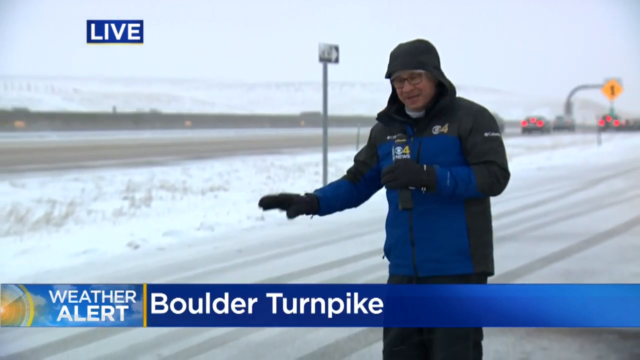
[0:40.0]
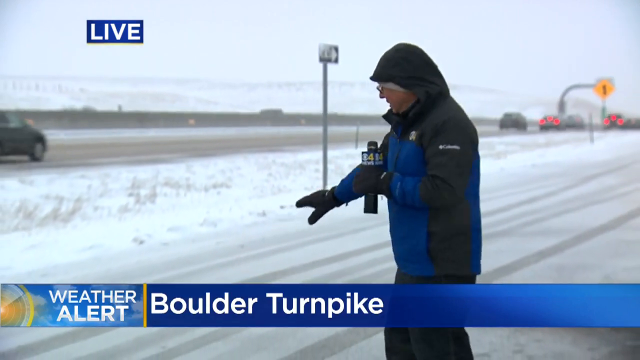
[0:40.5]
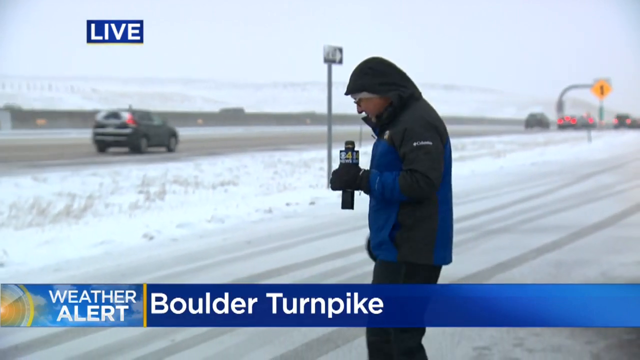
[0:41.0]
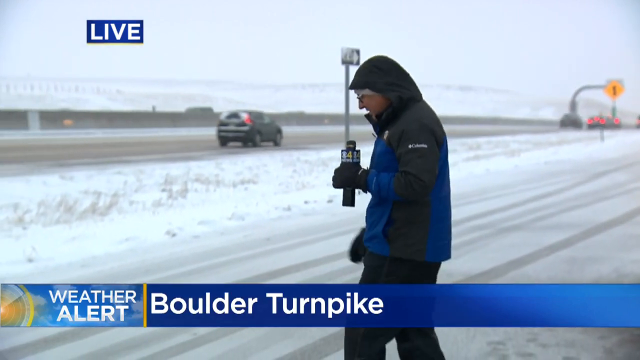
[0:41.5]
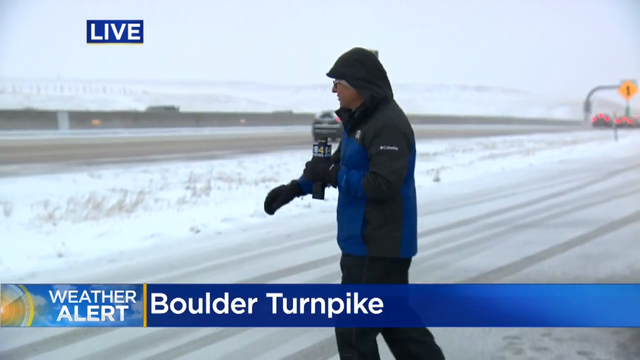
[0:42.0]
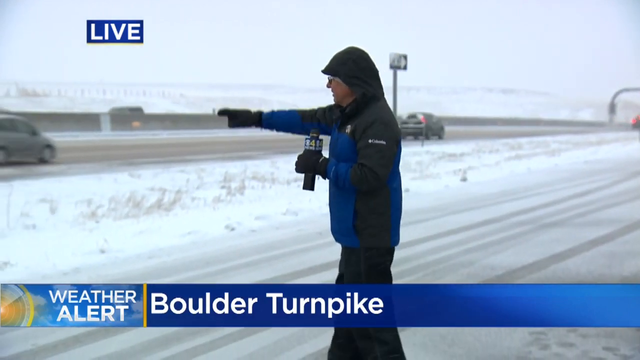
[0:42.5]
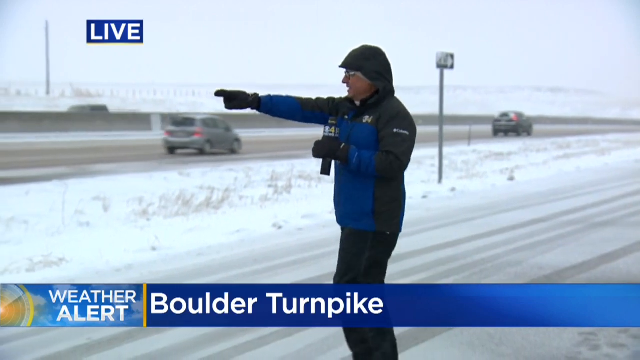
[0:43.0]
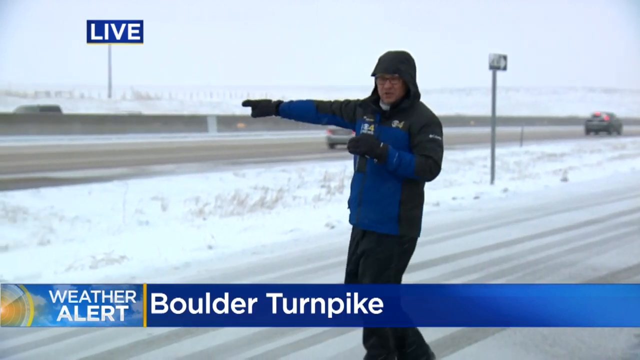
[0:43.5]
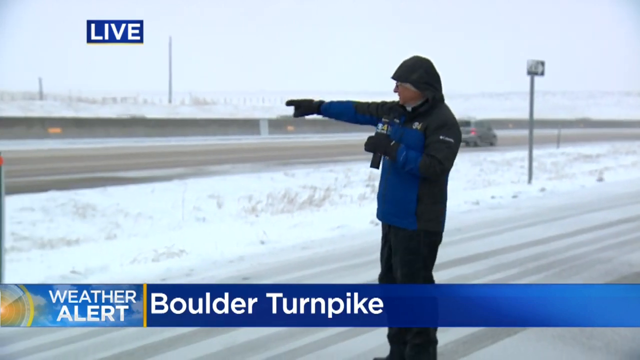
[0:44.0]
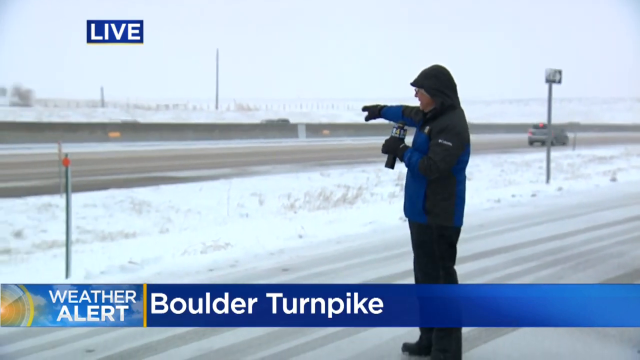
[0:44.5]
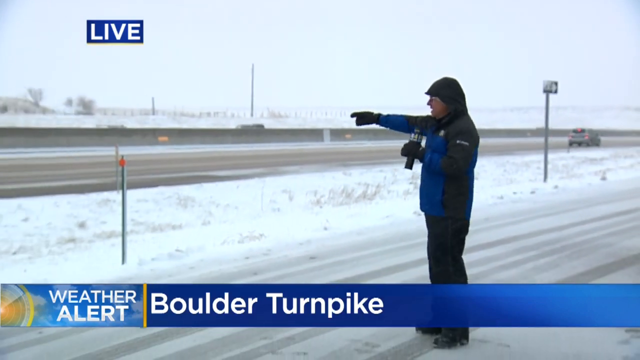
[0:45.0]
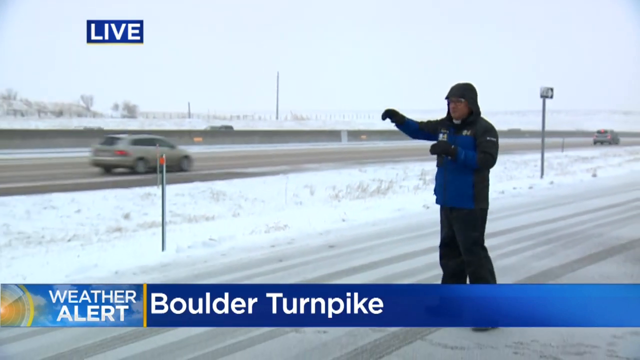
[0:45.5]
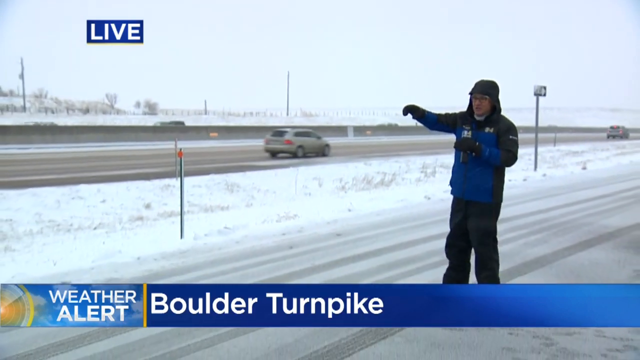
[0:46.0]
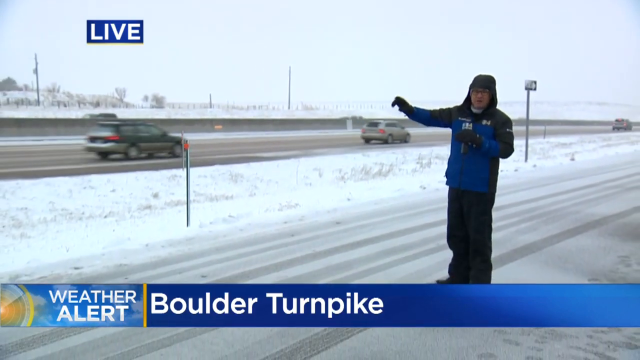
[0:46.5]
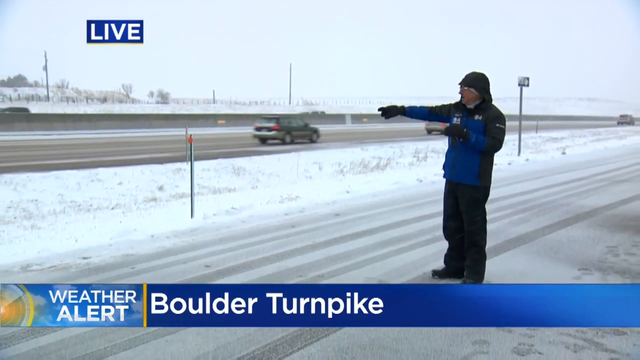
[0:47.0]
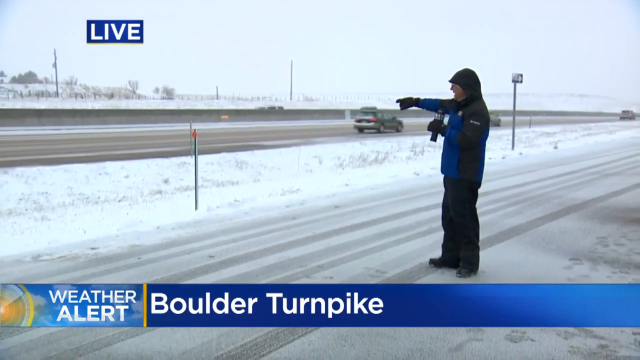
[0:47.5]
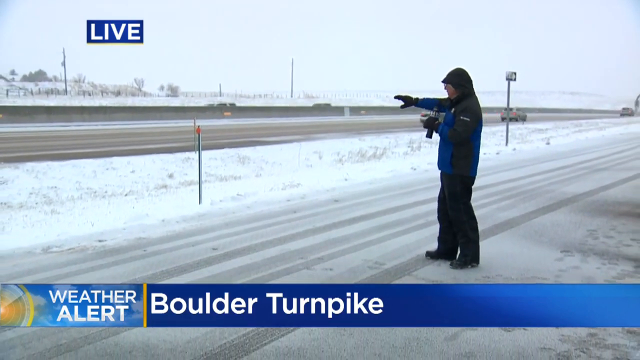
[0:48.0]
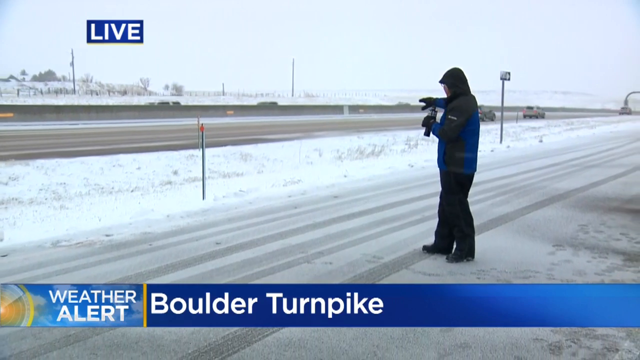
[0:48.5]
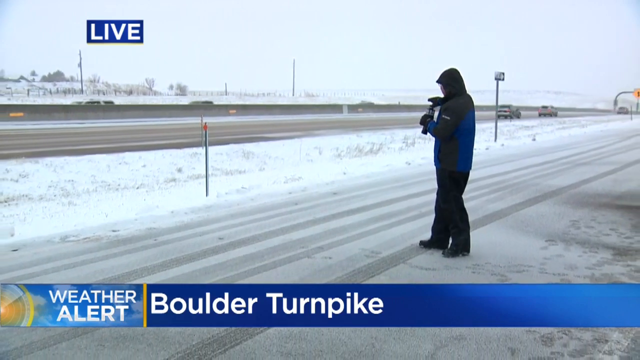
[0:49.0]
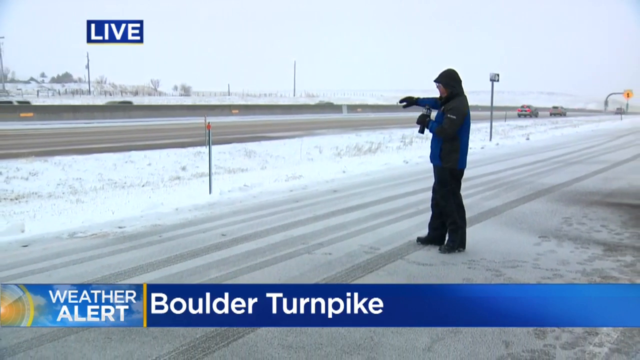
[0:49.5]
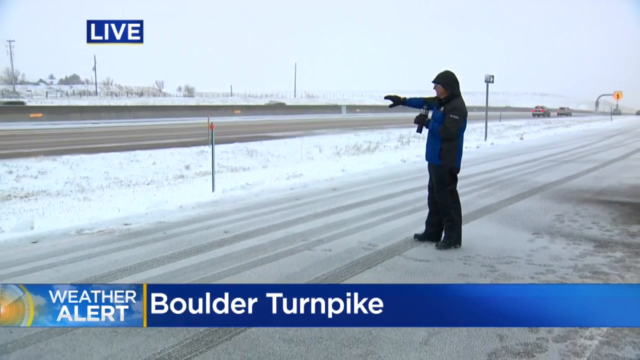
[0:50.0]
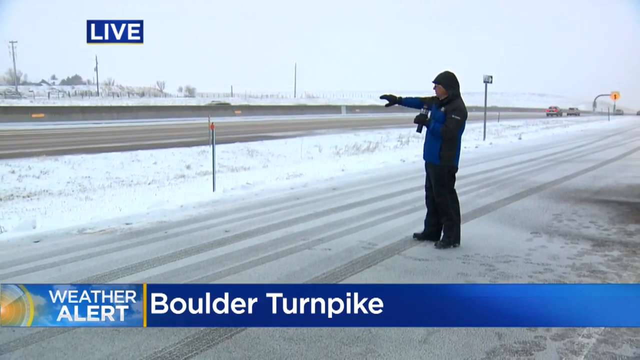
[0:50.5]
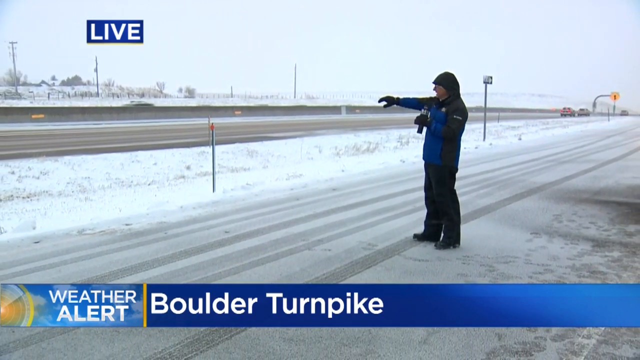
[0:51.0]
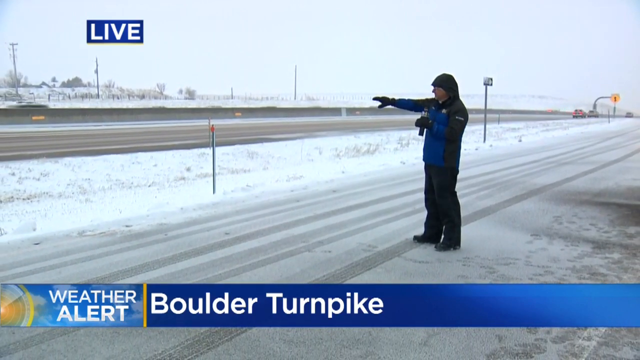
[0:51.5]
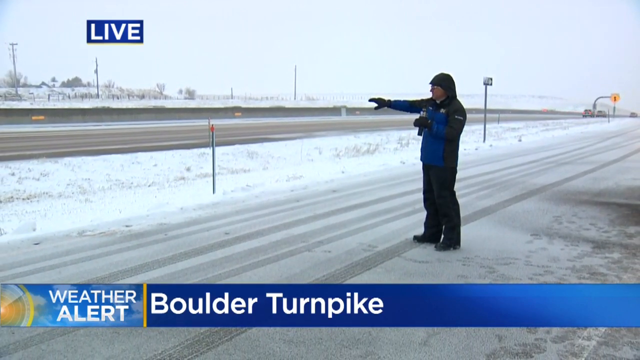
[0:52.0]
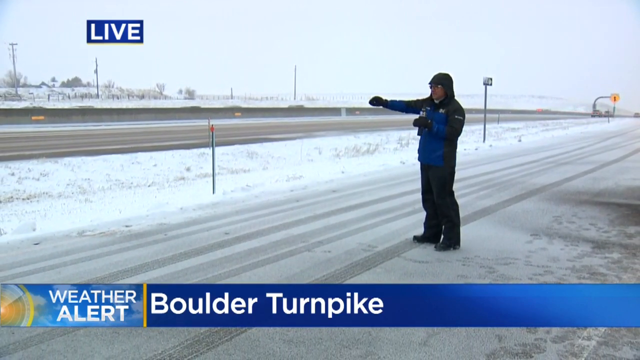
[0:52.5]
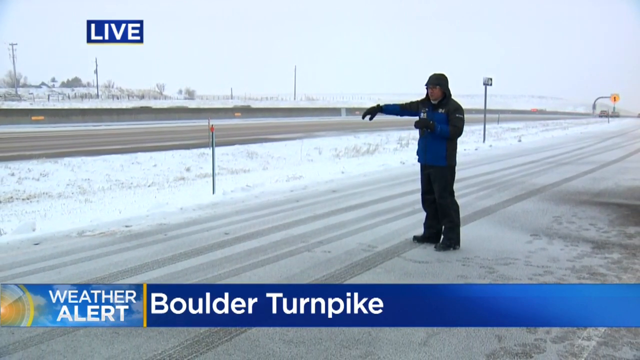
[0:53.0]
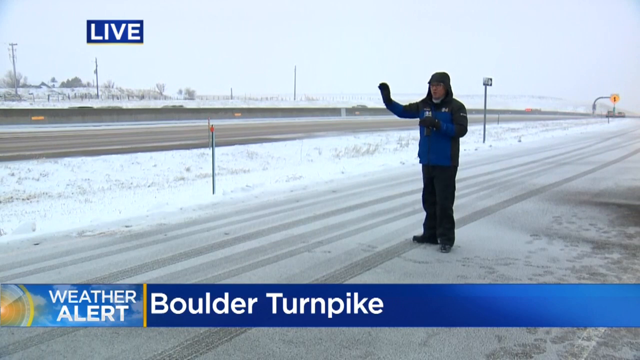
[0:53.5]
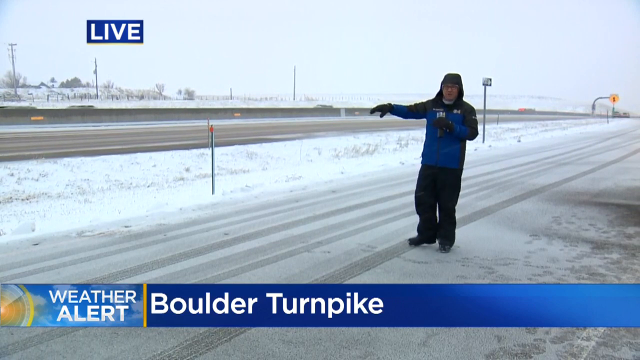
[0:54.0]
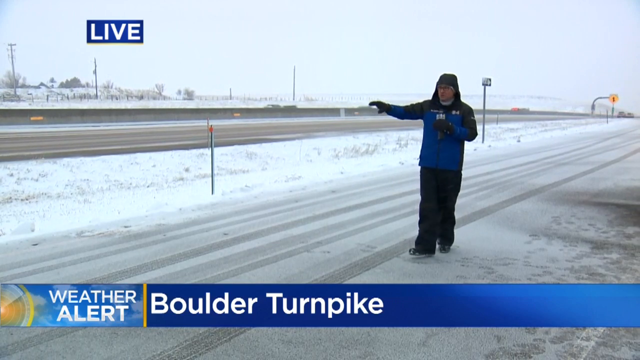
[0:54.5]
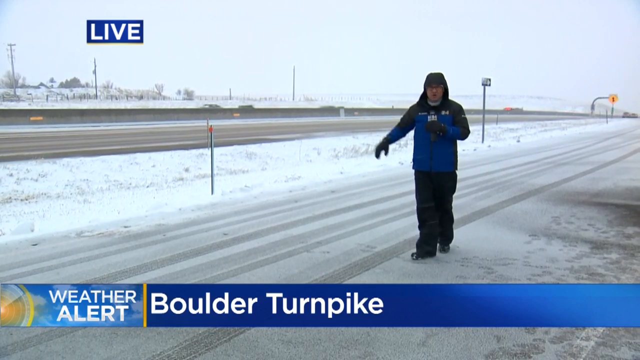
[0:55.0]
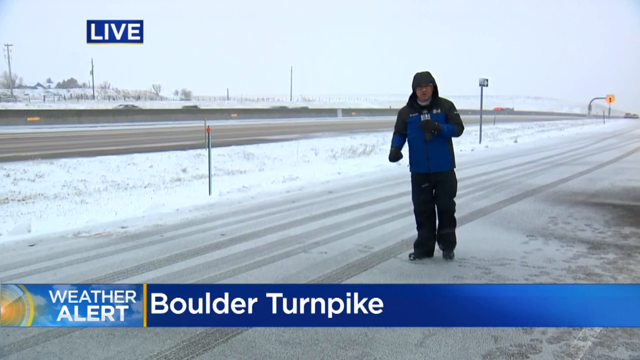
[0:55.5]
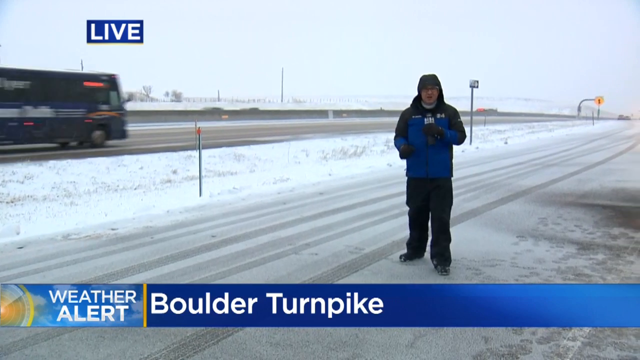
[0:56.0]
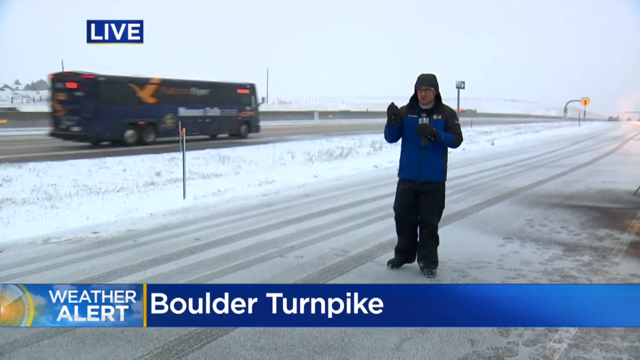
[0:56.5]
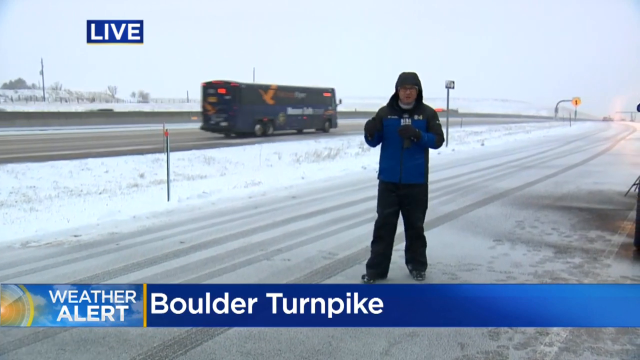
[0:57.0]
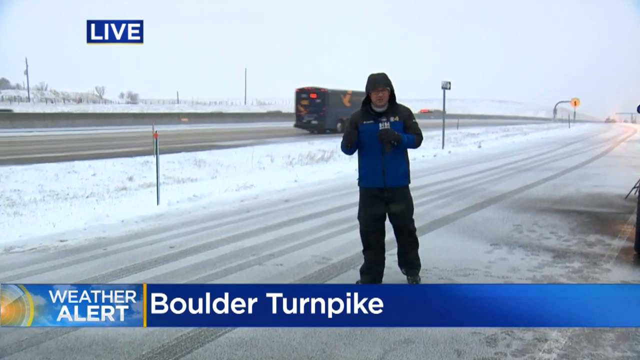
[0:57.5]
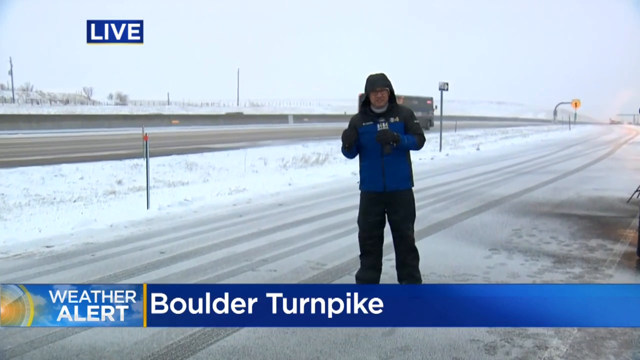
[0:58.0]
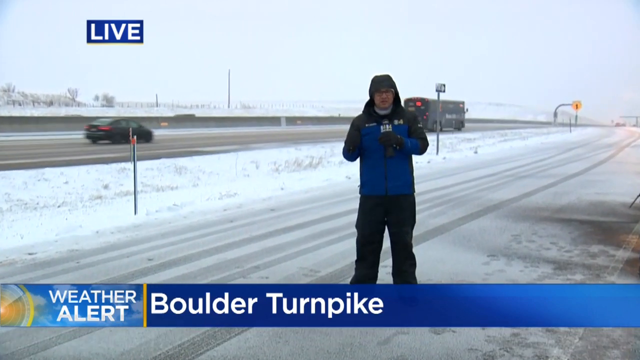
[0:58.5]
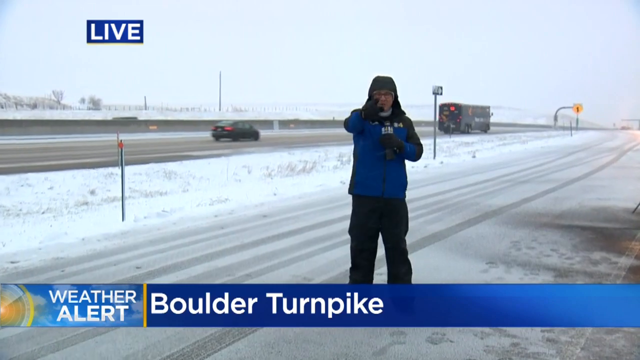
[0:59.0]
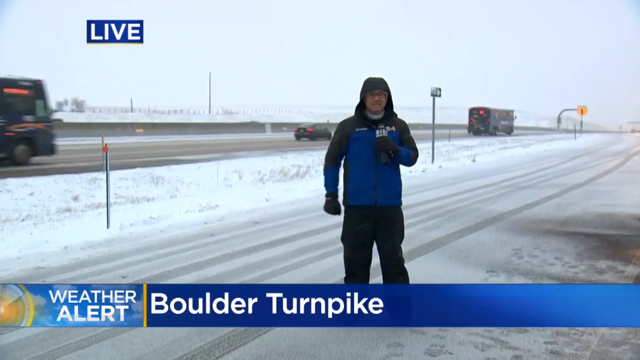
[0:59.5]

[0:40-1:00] The live weather broadcast shows "live" at the top in white text on a blue background, and at the bottom "weather alert" and then "Boulder Turnpike" in white text on a blue background. The man wears glasses and a Columbia winter jacket with the CBS logo and the number four, with "Columbia" visible on the sleeve. The jacket is black and blue, the blue on the chest and at the ends of the sleeves. He also wears a pair of black gloves. He stands in the road, which has some salt or snow on it, with snow in the median, and the sky is kind of white. He walks carefully across the road and points to some traffic on the side as cars go by. It looks very slick outside. The camera pans out, showing more of the road and the traffic around him. He appears to be giving a weather report, talking into the mic.